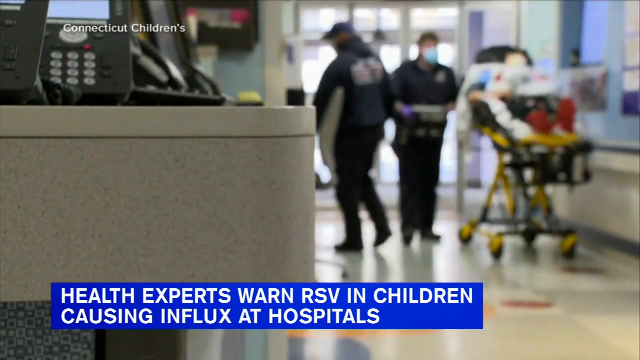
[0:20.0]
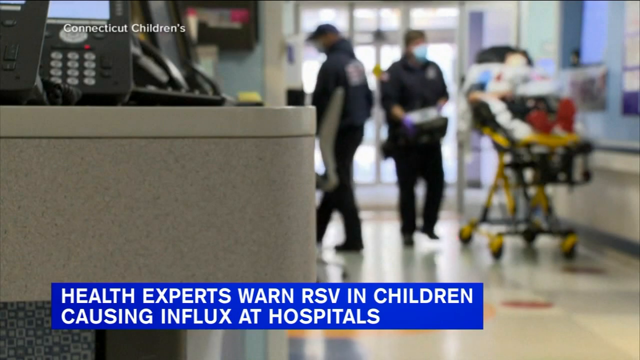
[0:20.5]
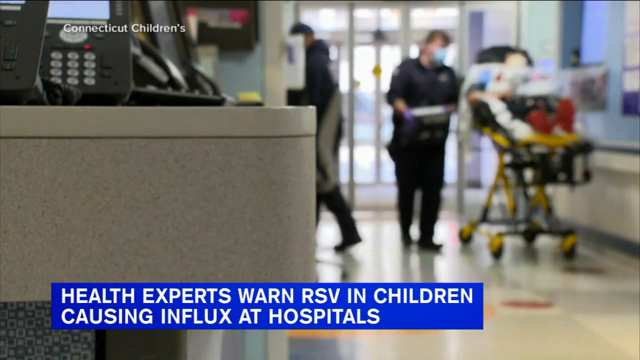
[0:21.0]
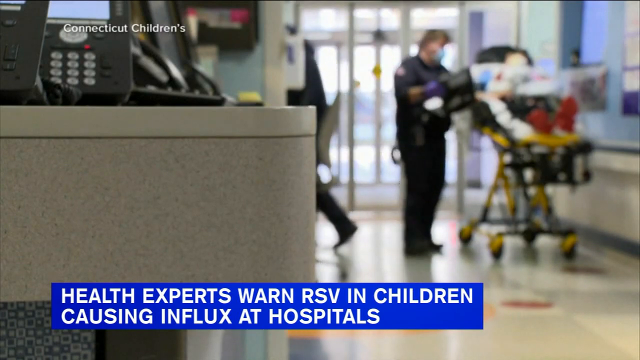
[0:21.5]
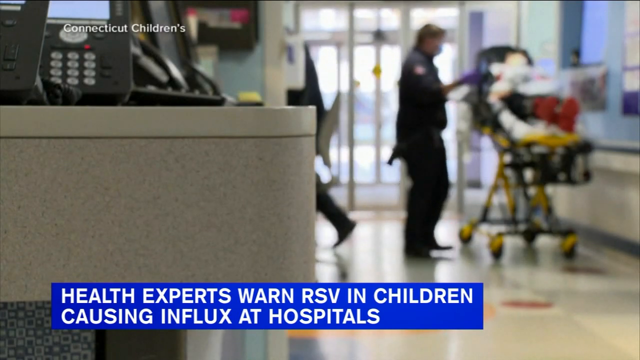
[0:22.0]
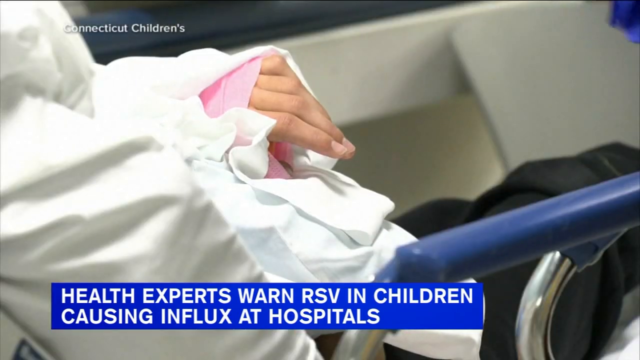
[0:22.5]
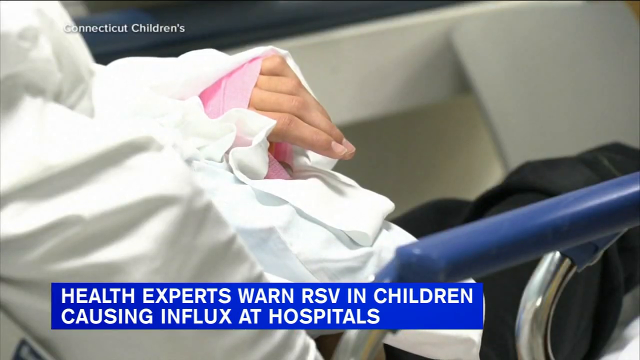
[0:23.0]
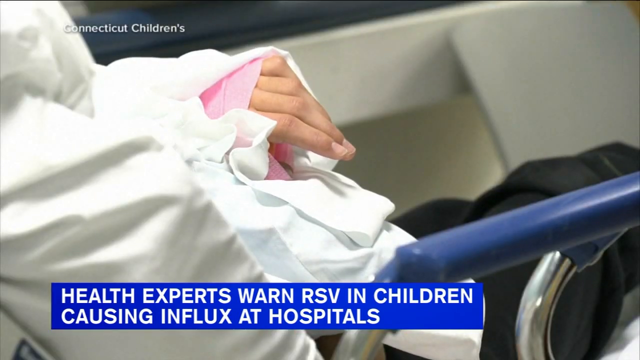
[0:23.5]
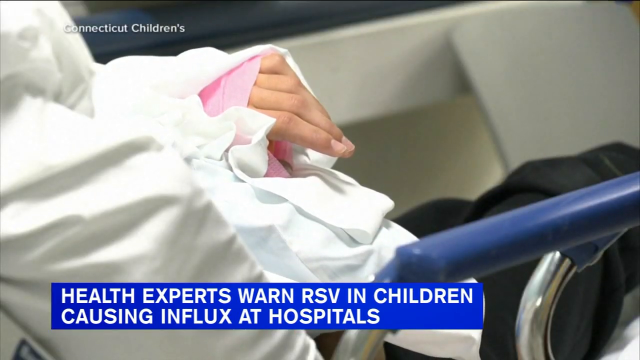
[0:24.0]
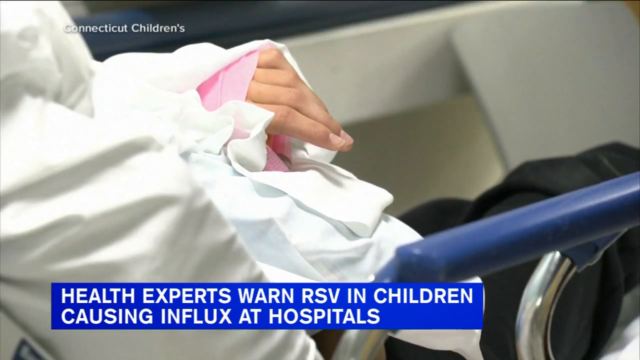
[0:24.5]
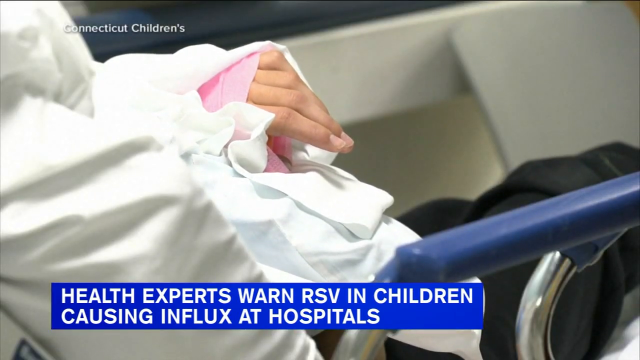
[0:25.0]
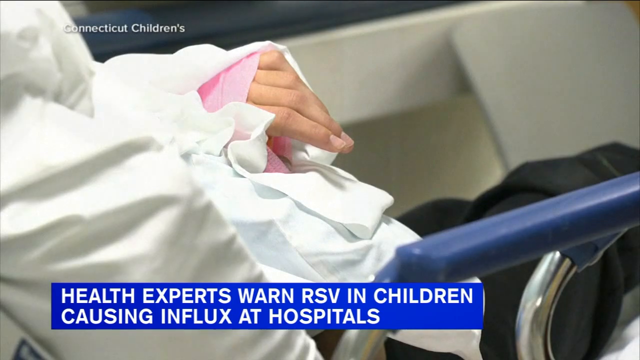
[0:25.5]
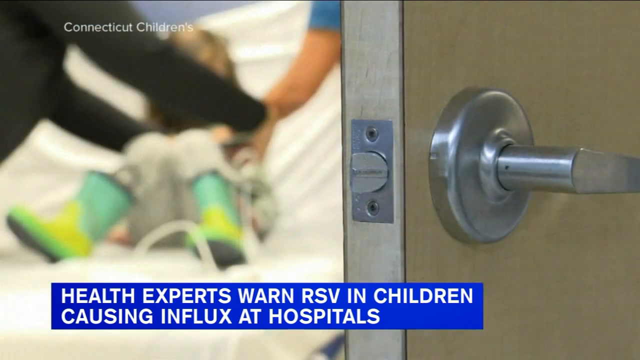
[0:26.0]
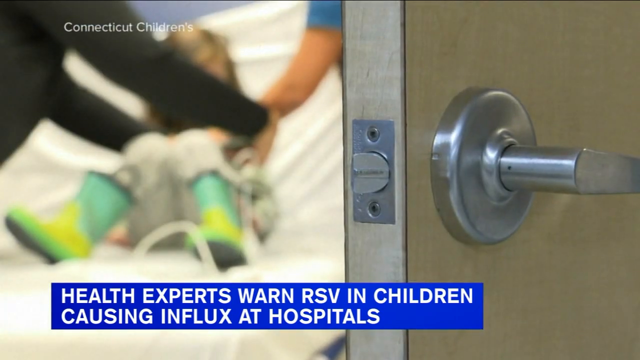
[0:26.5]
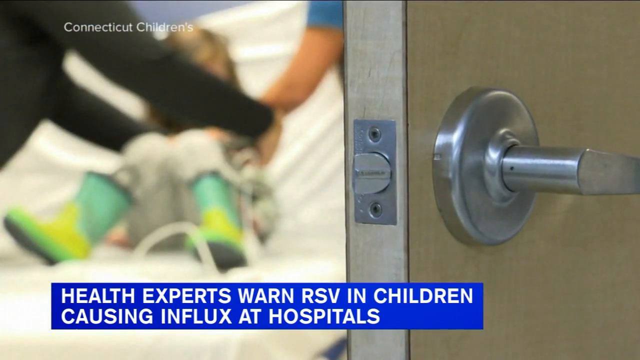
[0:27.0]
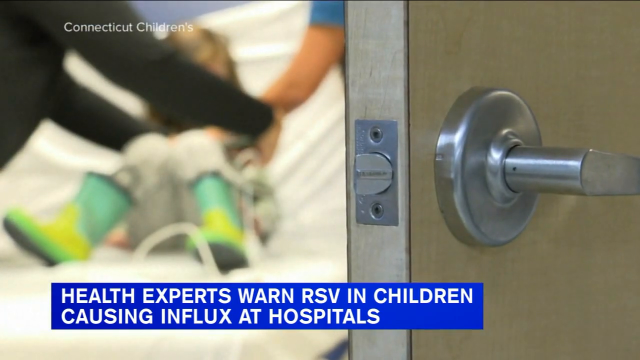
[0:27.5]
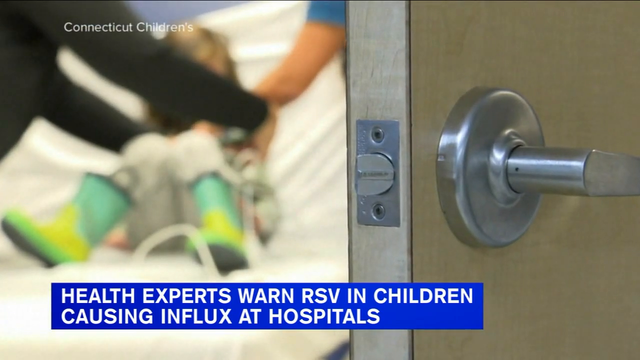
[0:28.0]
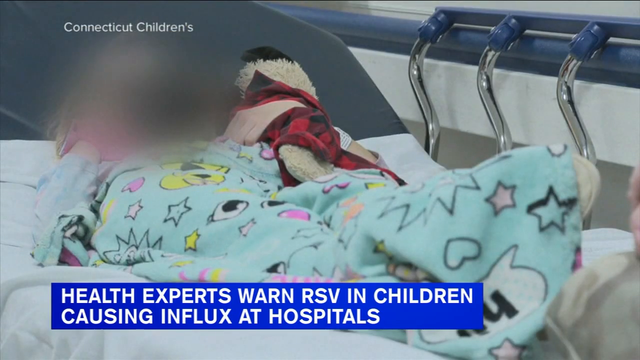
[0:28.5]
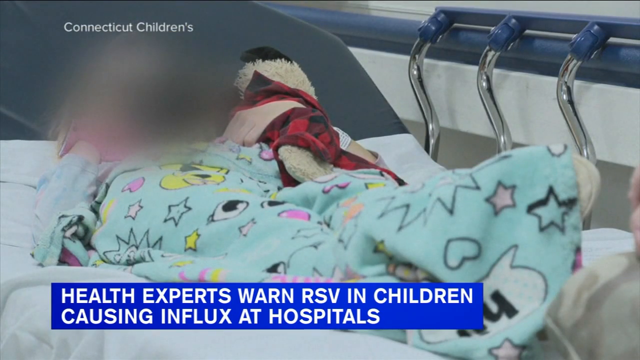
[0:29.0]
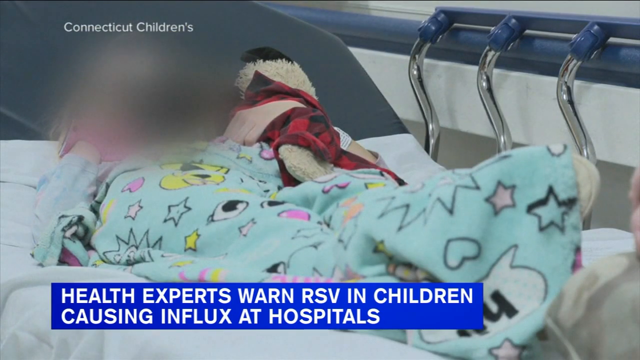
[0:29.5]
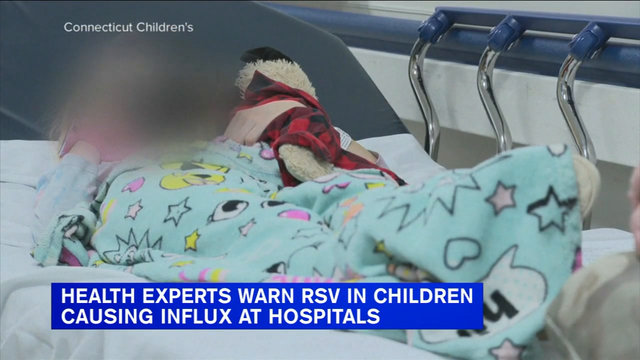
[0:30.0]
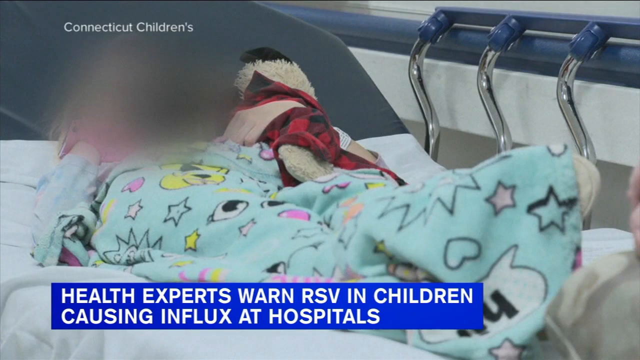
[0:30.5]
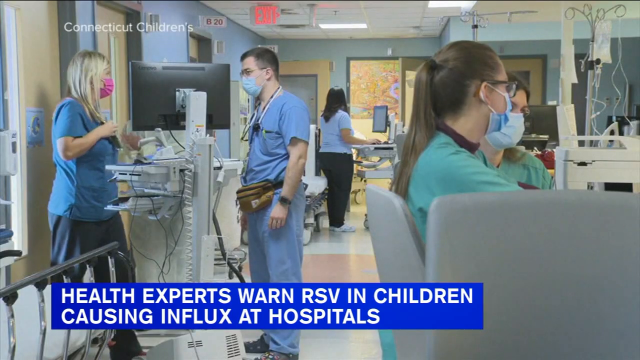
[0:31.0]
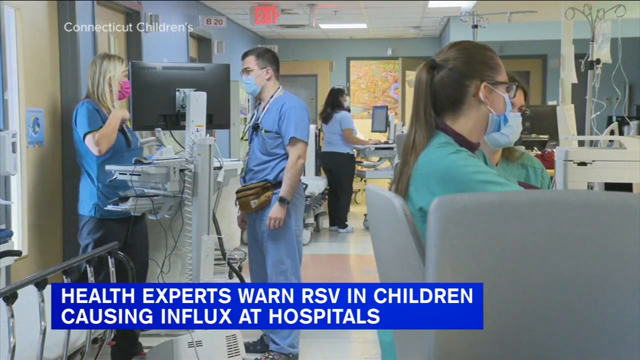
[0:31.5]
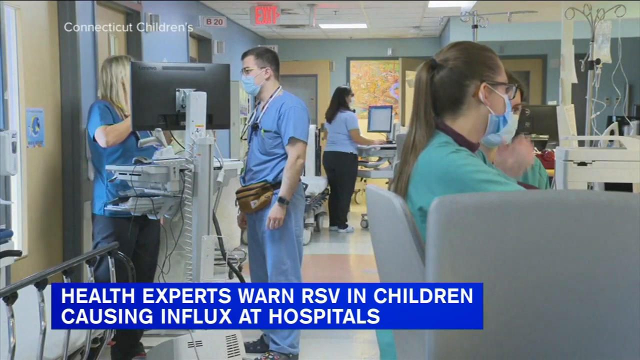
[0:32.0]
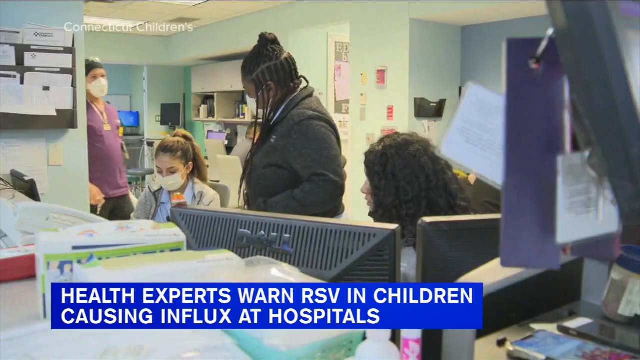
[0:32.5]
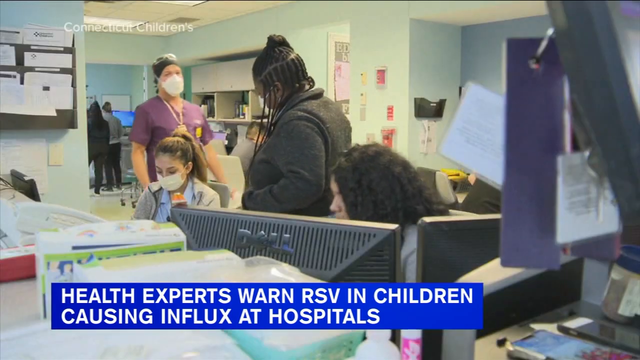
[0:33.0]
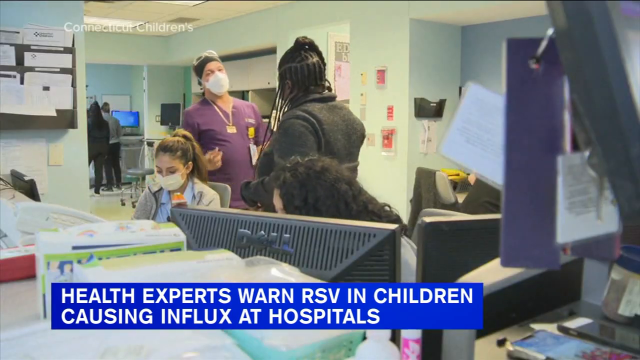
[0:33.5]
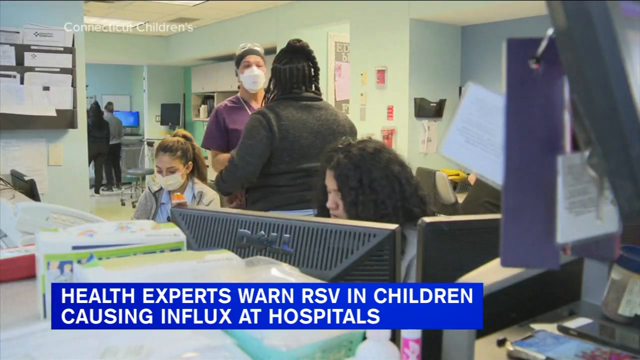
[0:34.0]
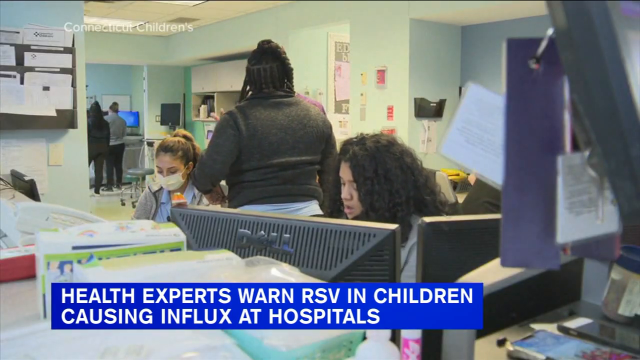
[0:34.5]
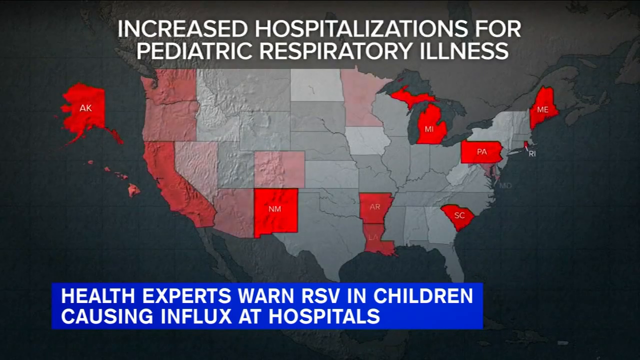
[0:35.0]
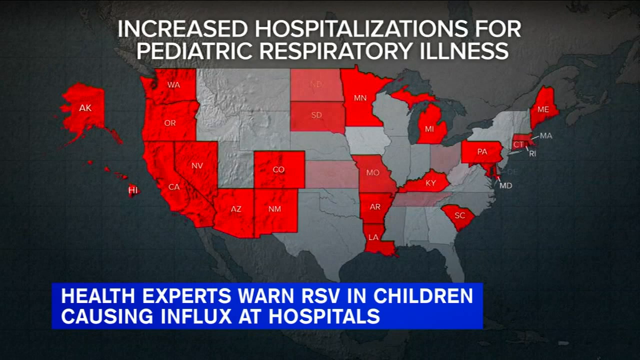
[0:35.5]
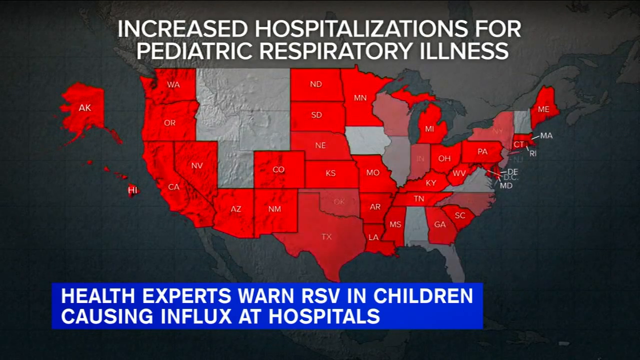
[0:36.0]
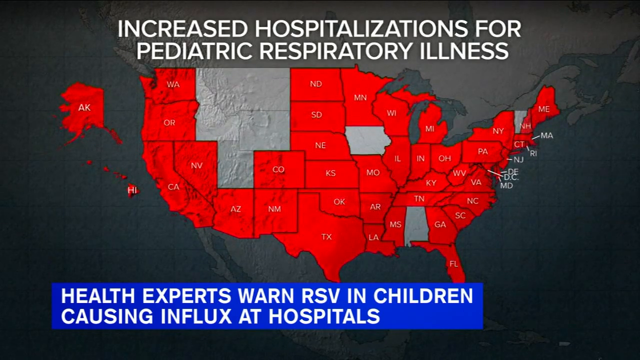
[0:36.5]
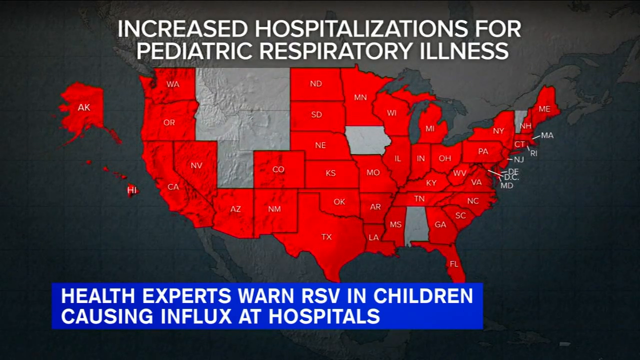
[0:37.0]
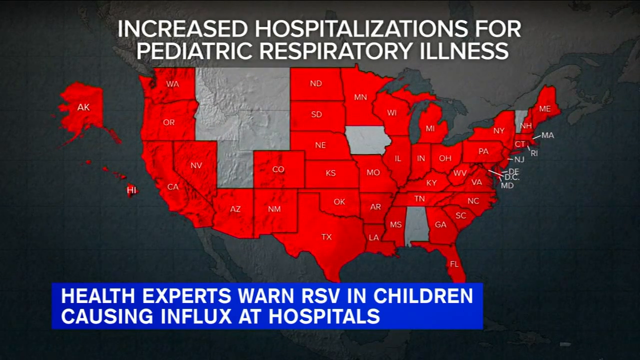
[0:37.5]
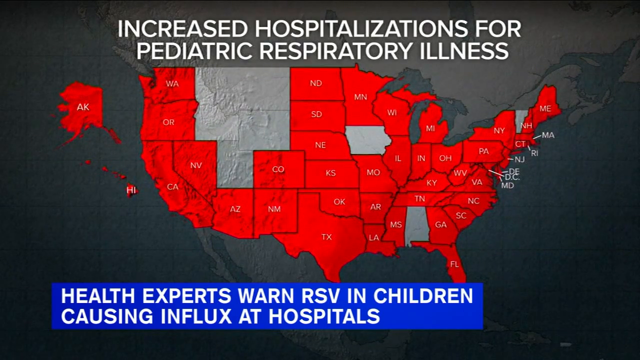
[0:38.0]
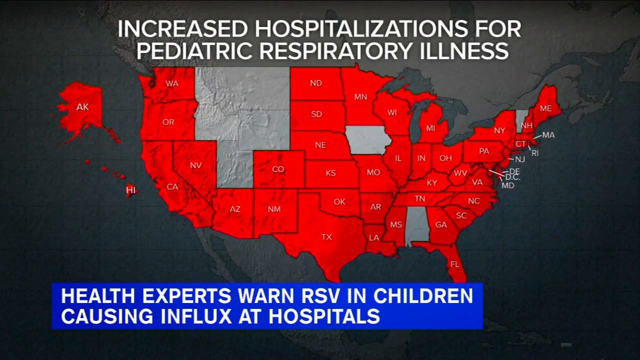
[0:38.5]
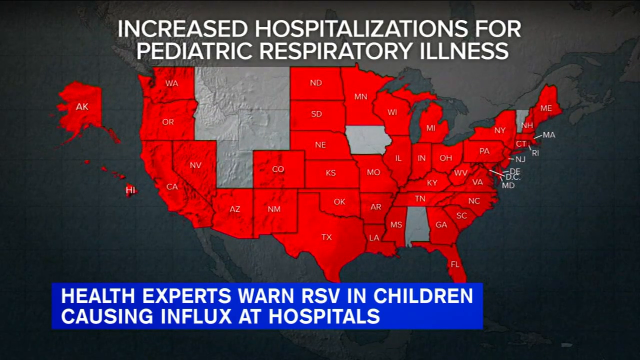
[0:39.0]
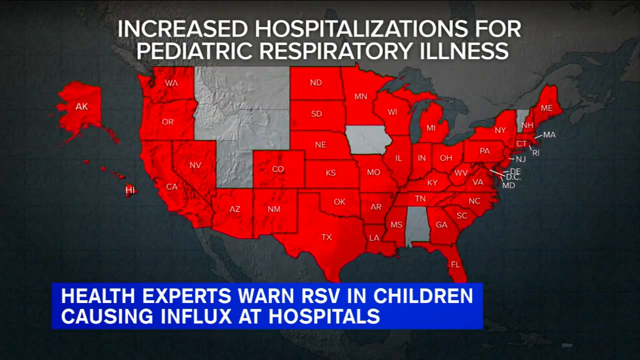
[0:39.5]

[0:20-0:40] At the hospital entrance, a black and yellow gurney carries a patient strapped into it, and an adult man in dark black scrubs and a blue medical mask stands beside it. A close-up shows a patient mostly wrapped in white cloths, with the fingers of their left hand visible. In the next scene, two medical workers help a young child who sits in a hospital bed wearing a blue and yellow boot. Another scene shows a photo of a child laying in the back of a hospital bed, wearing blue, slightly fuzzy pajamas with stars and eyes drawn on them. Inside the hospital, doctors and staff walk around the desks and talk with each other. Finally, a map of the United States goes from gray to red in certain states, with the red showing increased hospitalizations for pediatric respiratory illness.